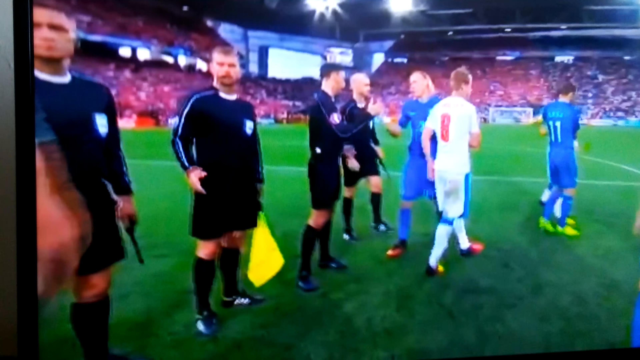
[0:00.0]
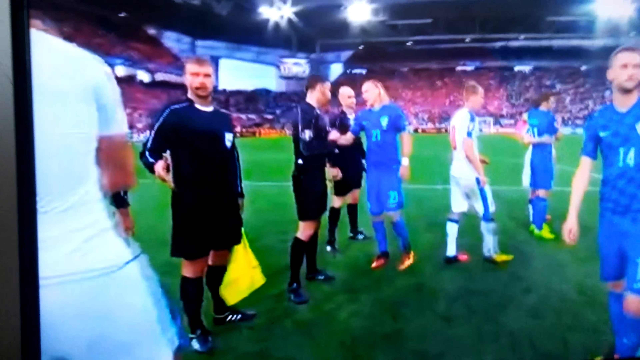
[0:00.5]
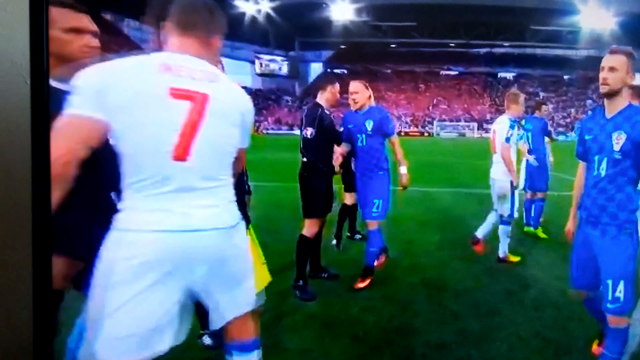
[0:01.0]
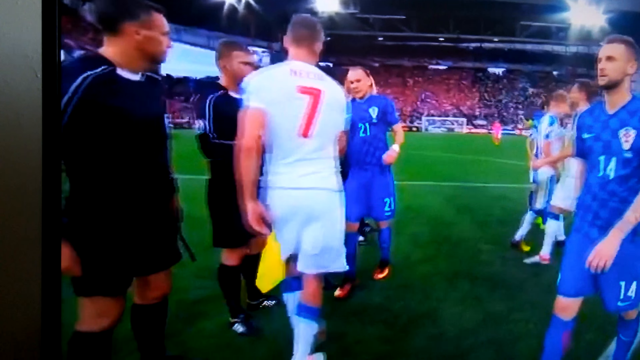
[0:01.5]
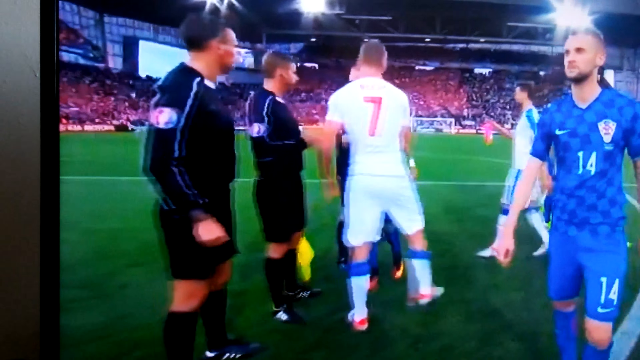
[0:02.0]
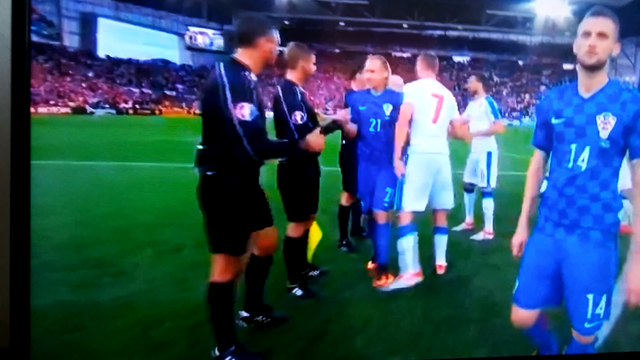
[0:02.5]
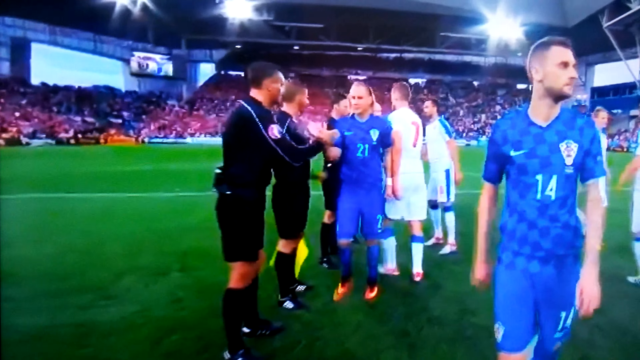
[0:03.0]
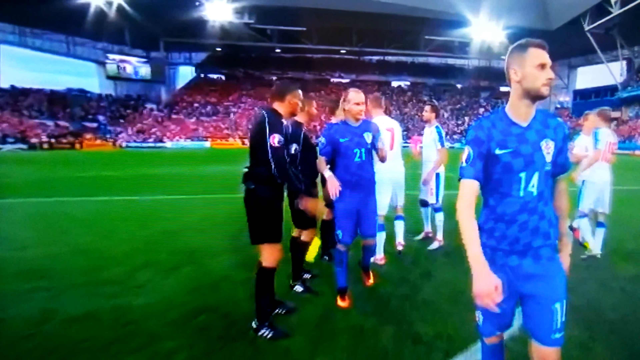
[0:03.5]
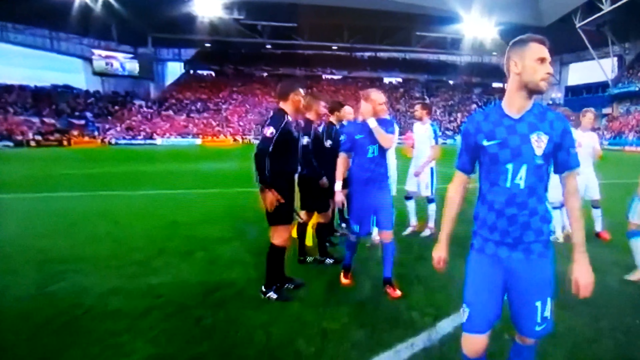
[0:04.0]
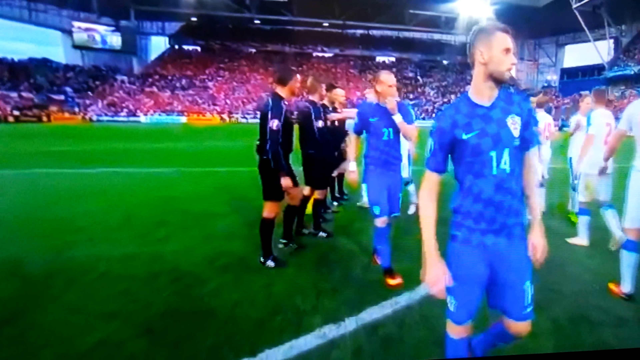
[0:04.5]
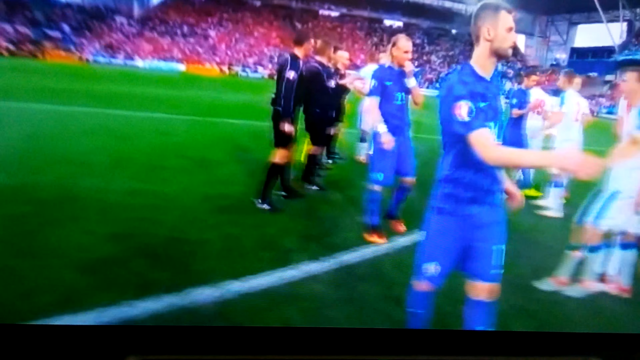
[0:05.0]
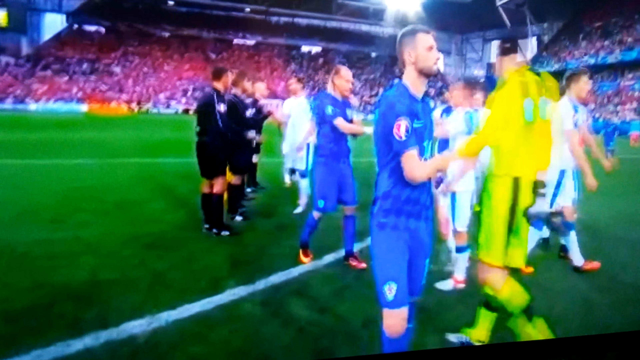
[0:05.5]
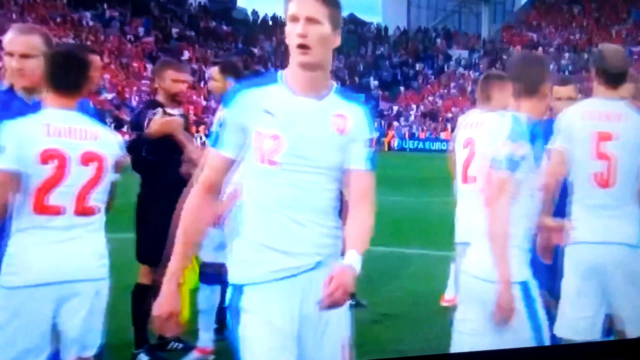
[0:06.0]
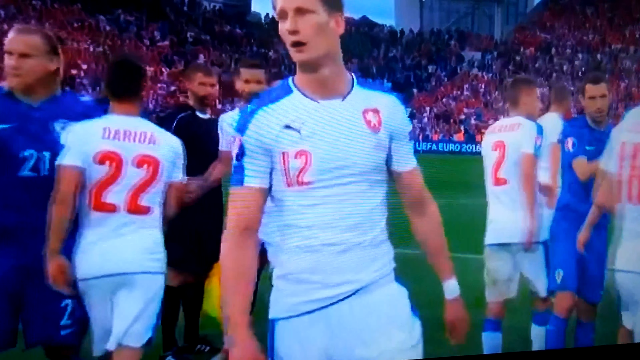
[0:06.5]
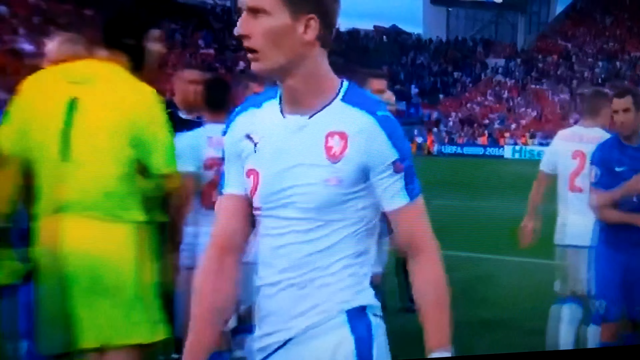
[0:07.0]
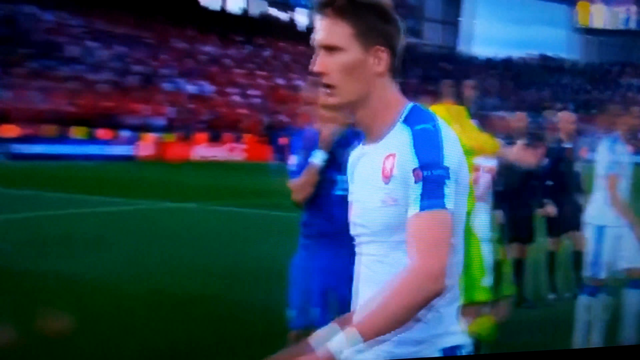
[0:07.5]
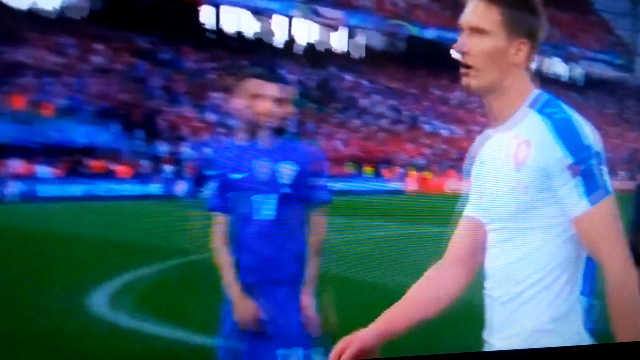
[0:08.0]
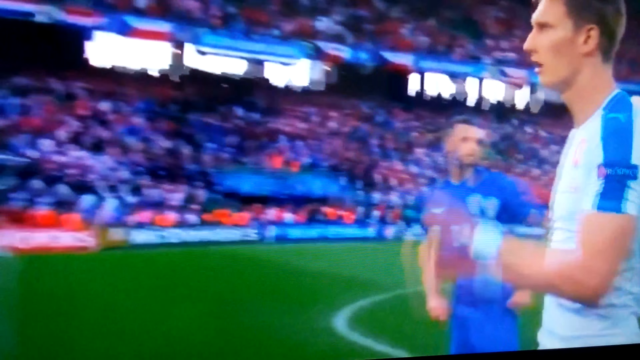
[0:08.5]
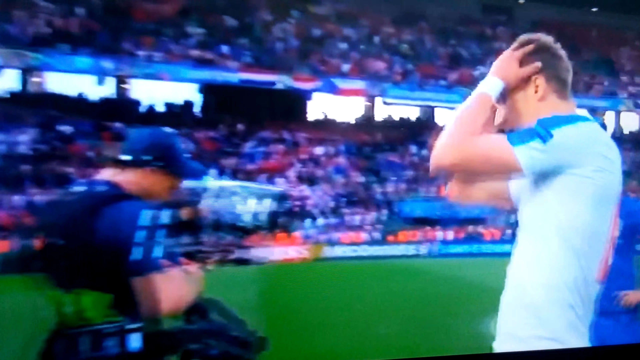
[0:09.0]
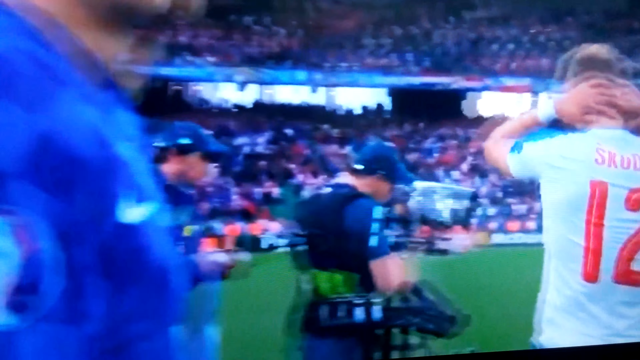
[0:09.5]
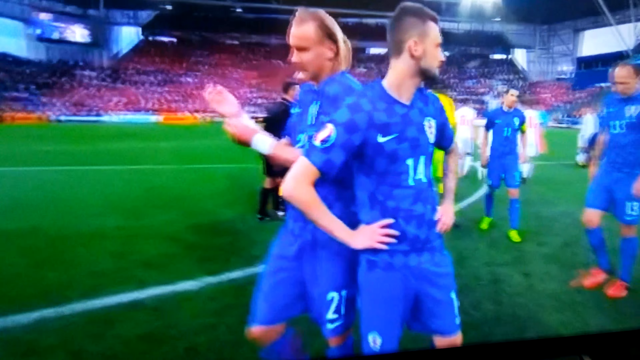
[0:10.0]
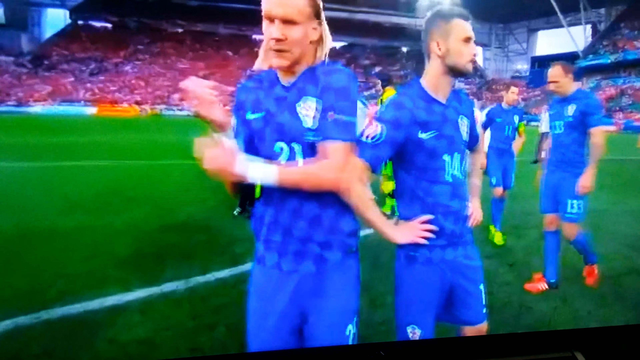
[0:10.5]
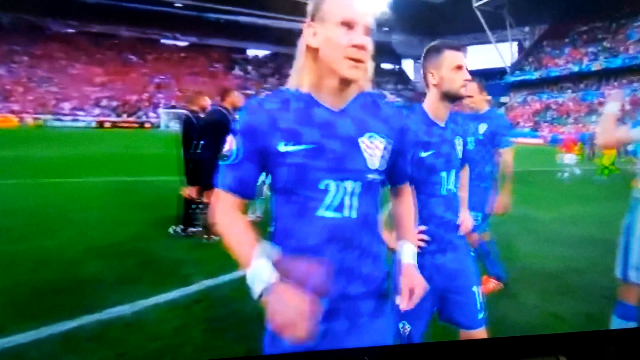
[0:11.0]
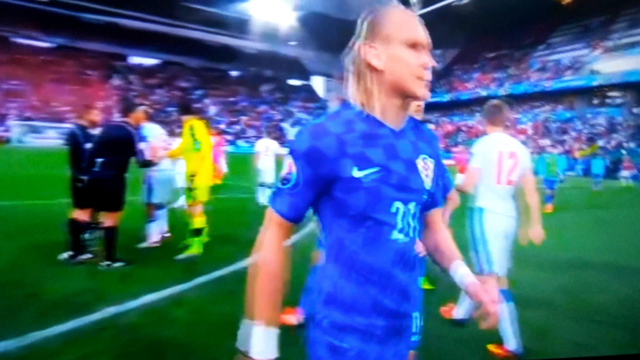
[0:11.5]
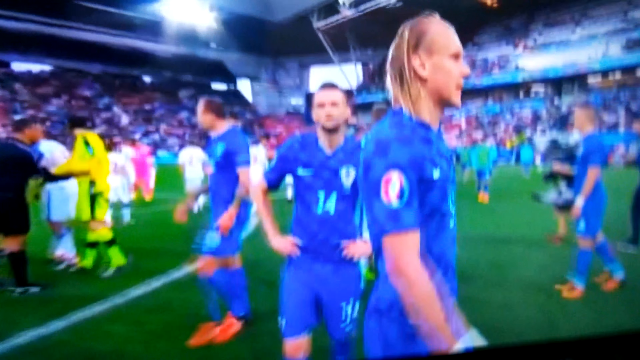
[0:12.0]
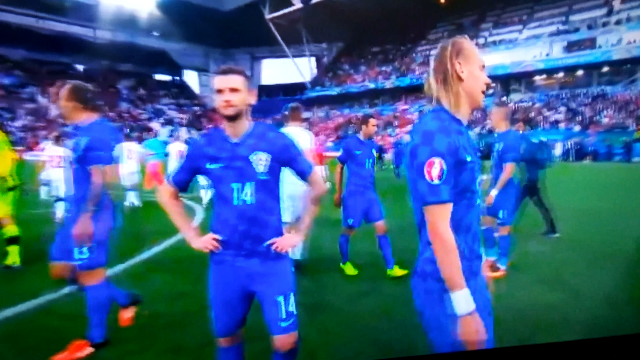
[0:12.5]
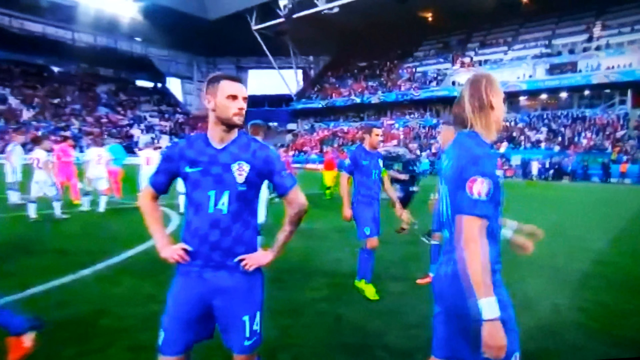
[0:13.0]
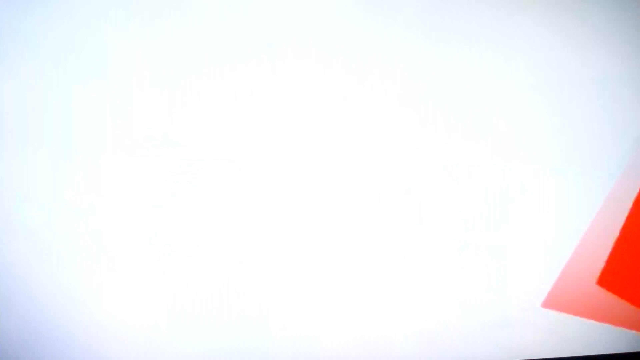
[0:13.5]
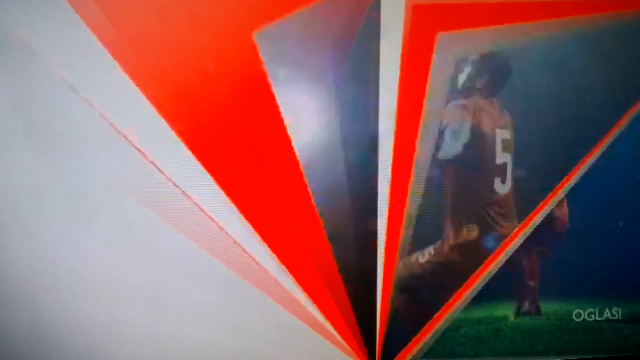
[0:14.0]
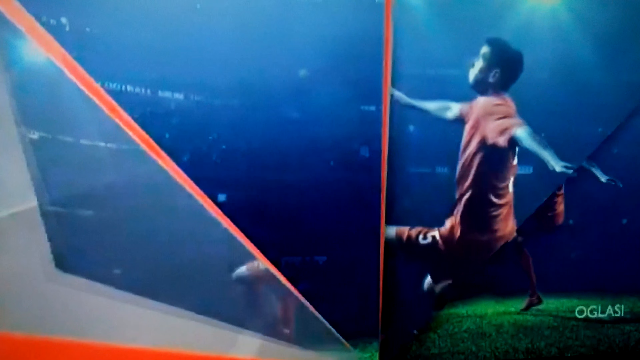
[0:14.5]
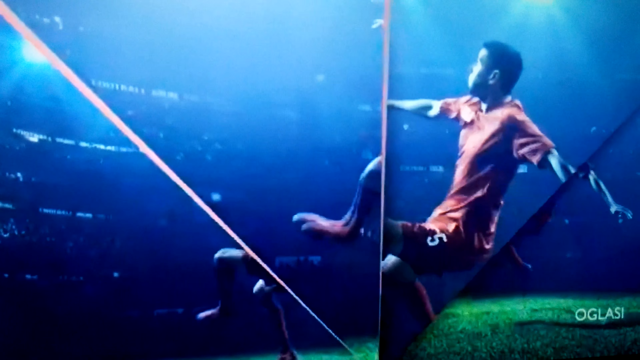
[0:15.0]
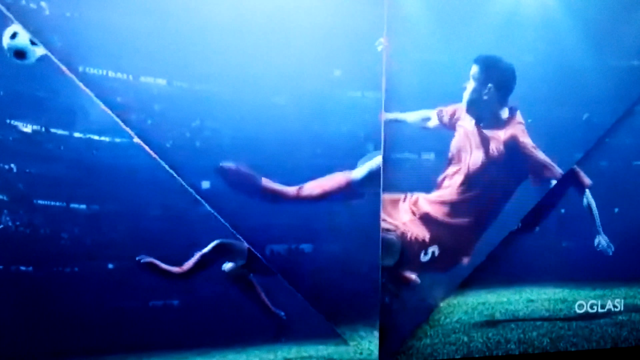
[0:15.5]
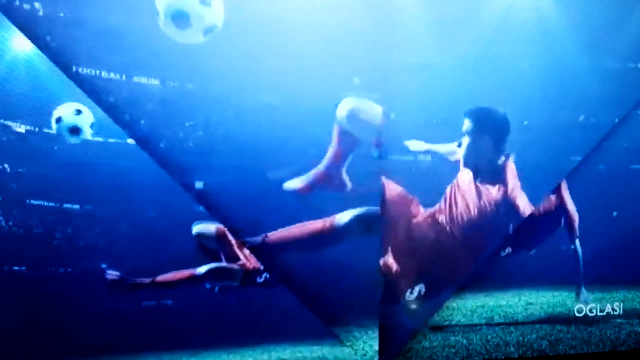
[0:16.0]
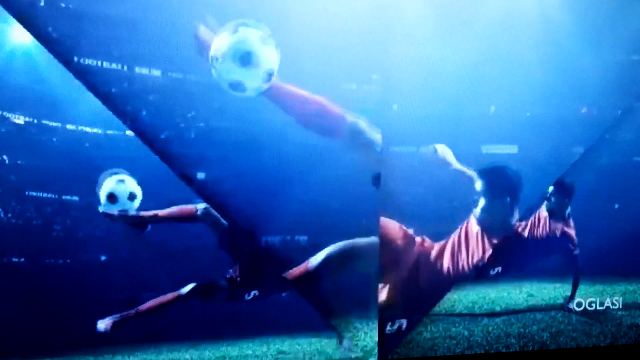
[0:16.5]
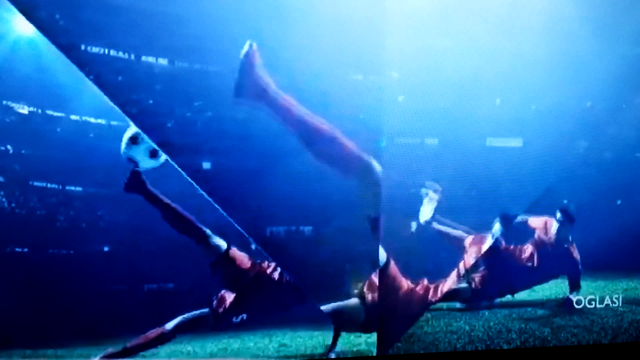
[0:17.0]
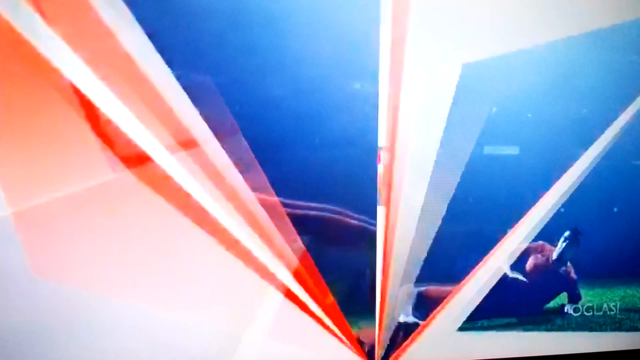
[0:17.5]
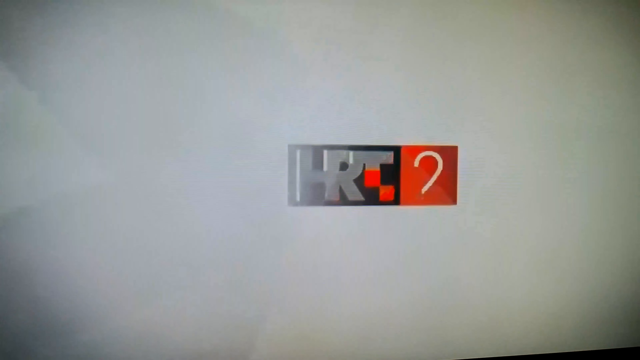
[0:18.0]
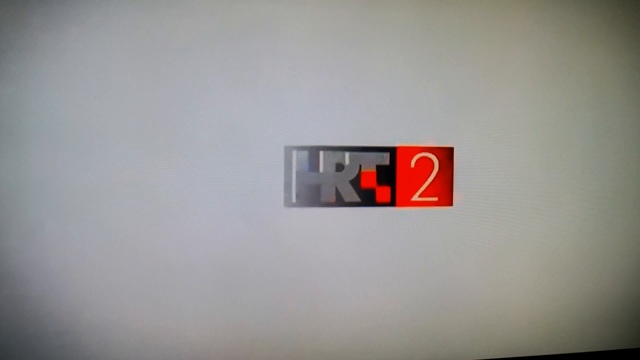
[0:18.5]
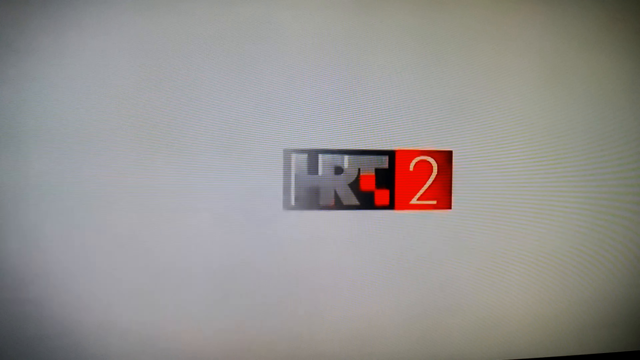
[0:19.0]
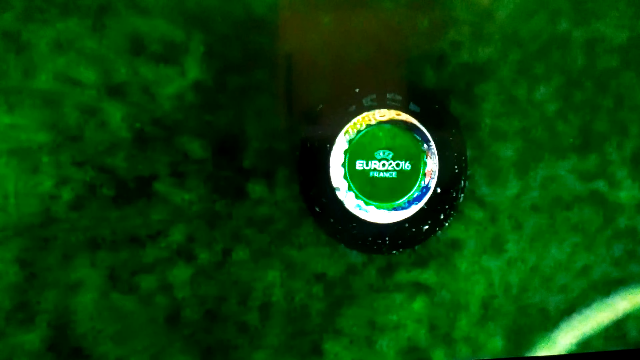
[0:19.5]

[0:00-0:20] A soccer game appears to be shown on a television screen. Apparently three players are on the field, along with some referees holding flags. There is a huge stadium with a green field, and lots of lights from the rafters shine down on the field. One team is in blue and the other in white. One of the blue players apparently walks over to one of the referees, who are all dressed in black, and they shake hands. A player in white comes over to one of the referees and shakes hands as well. It may be the end or the beginning of the game, but everyone is just shaking hands. Some of the blue players shake hands. The camera focuses for a while on one of the players in white as he puts his hands through his hair, then on a blue player with blonde hair, who walks away. The scene shifts to a commercial showing someone jumping in the air and kicking a soccer ball, split up by a computer graphic into multiple images of the person, as if seen through many different mirrors. The screen shifts to a logo reading "HRT" with a "2" at the end, and then to a soccer field with text beginning "Euro".